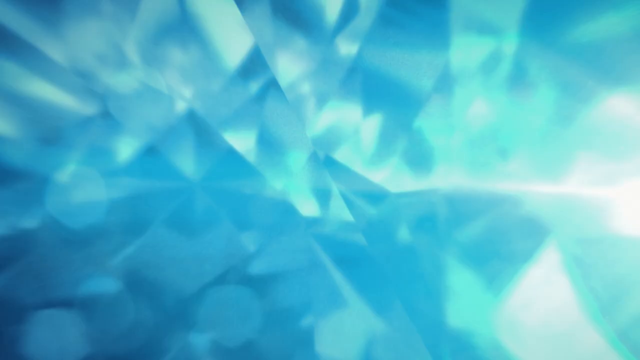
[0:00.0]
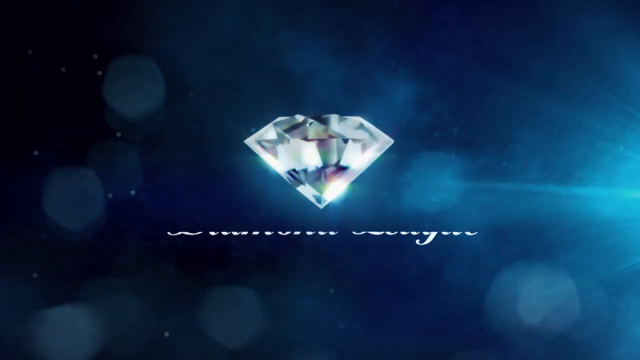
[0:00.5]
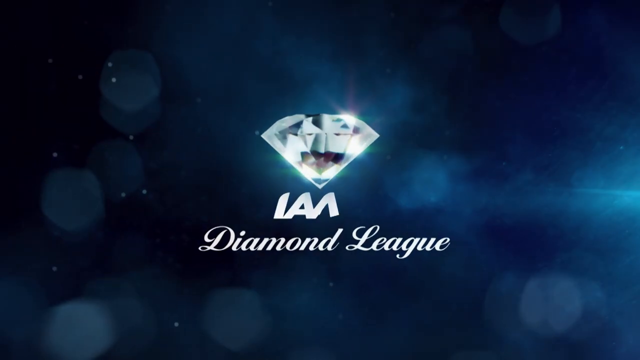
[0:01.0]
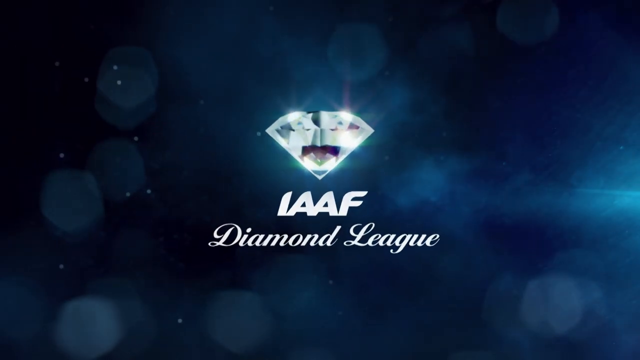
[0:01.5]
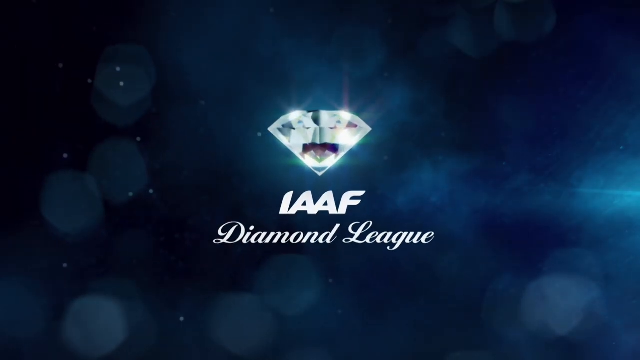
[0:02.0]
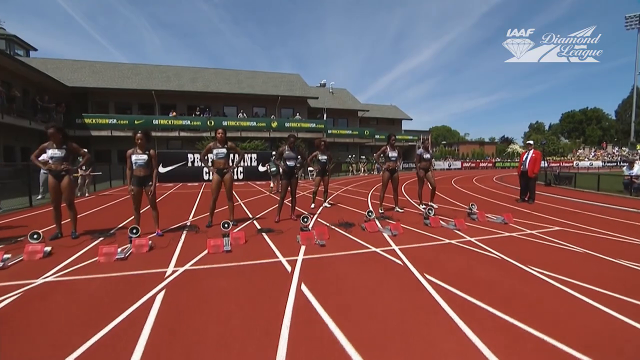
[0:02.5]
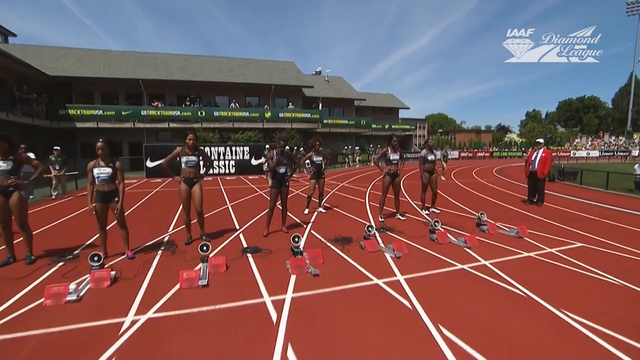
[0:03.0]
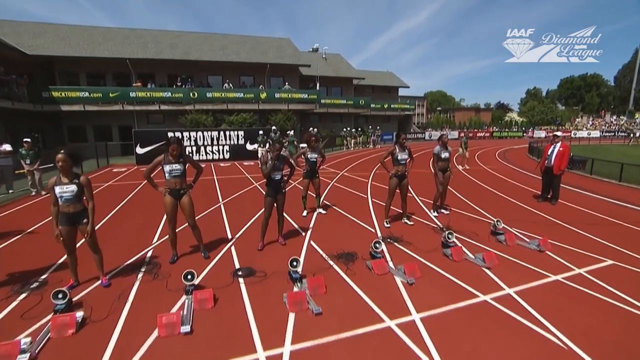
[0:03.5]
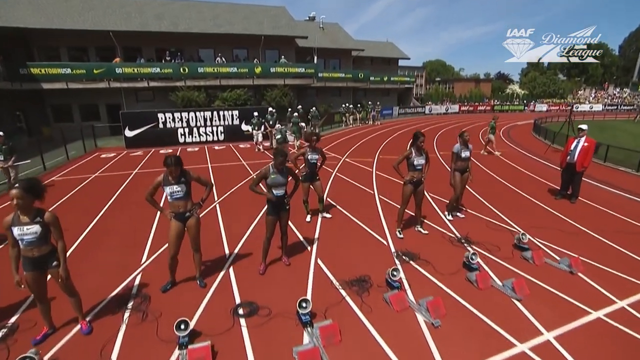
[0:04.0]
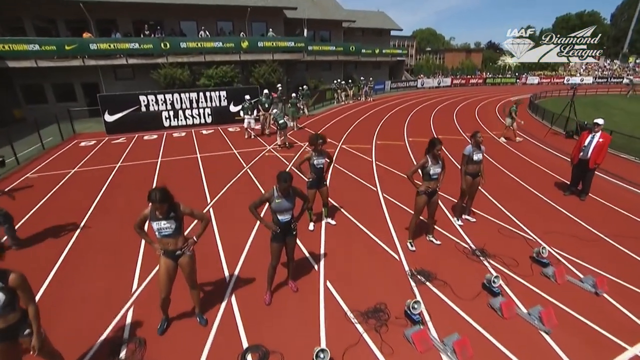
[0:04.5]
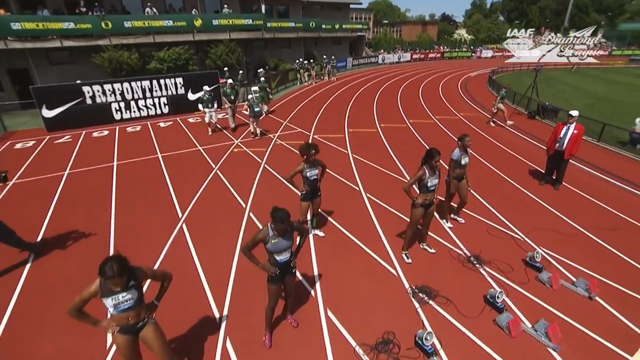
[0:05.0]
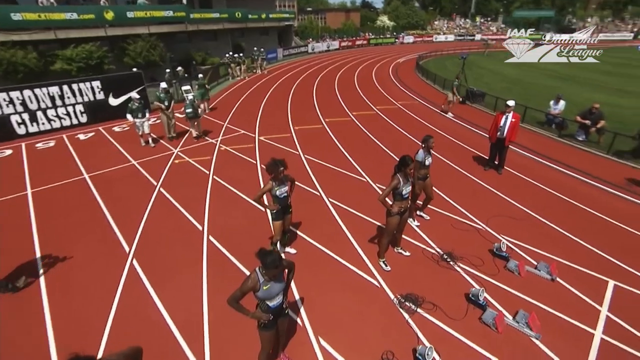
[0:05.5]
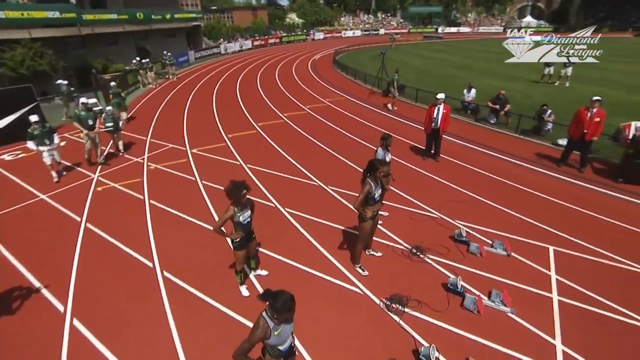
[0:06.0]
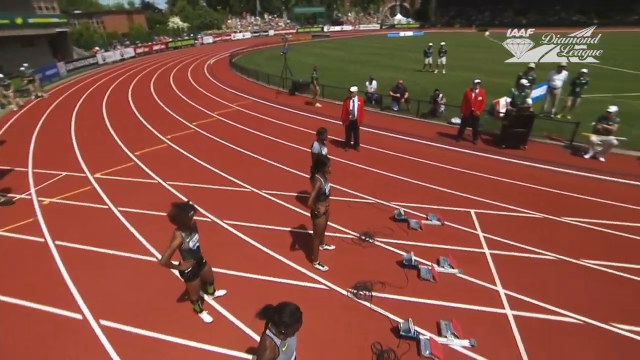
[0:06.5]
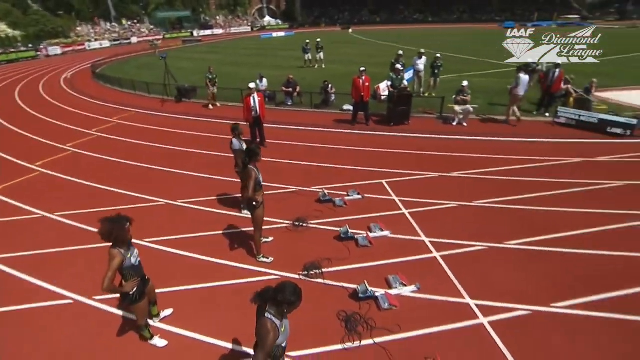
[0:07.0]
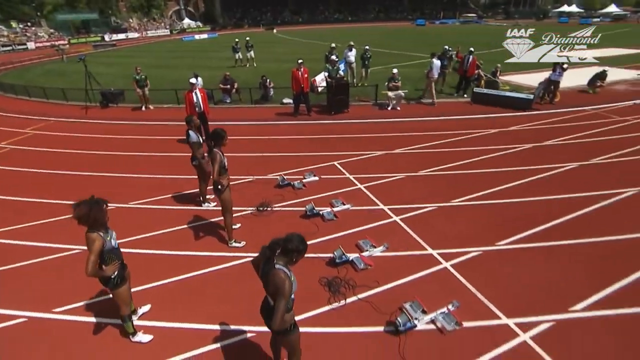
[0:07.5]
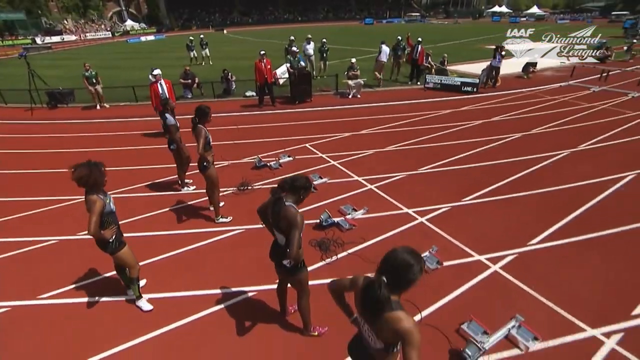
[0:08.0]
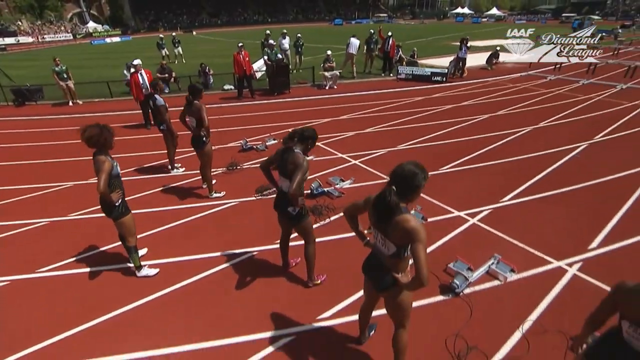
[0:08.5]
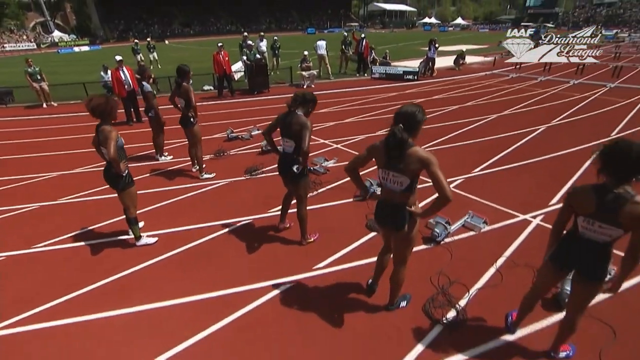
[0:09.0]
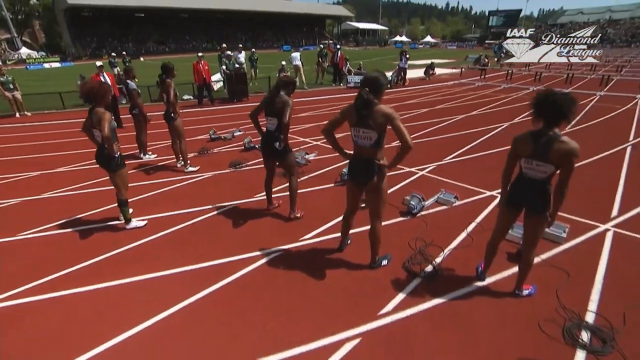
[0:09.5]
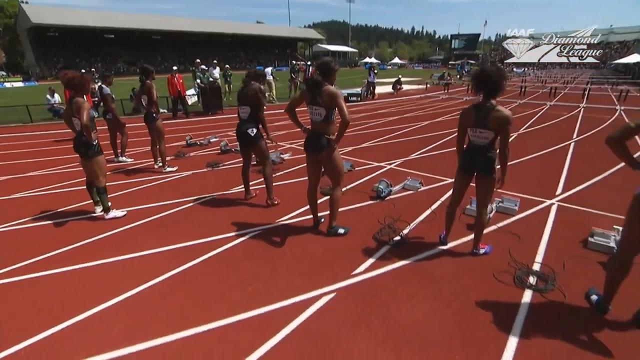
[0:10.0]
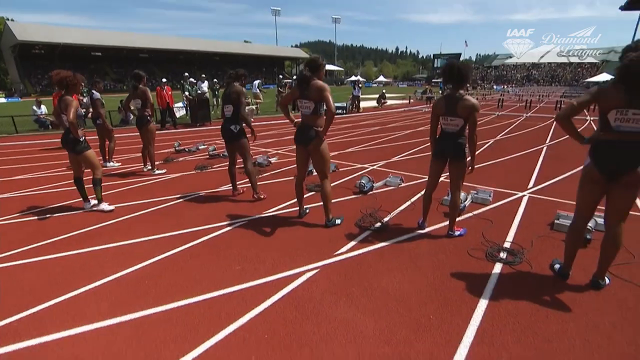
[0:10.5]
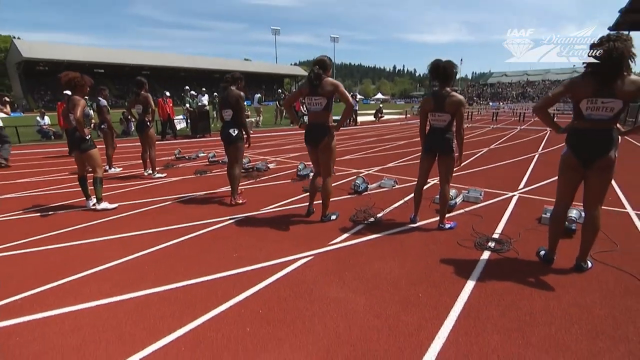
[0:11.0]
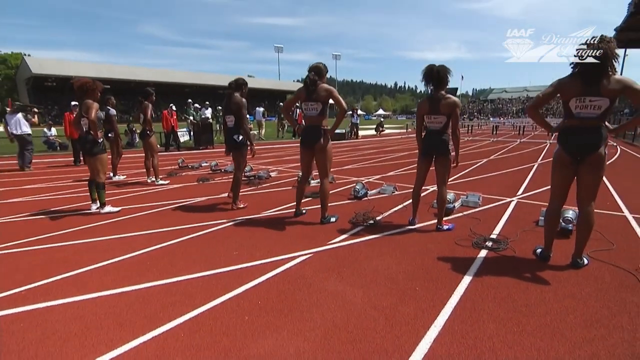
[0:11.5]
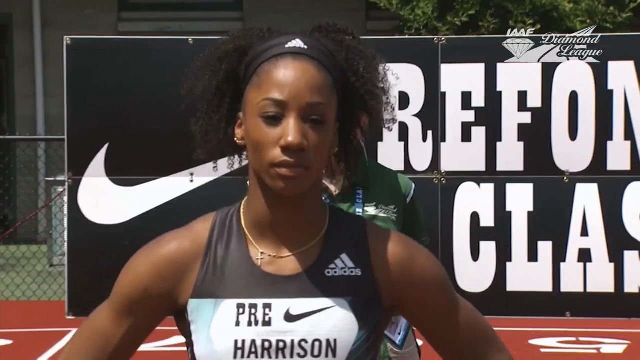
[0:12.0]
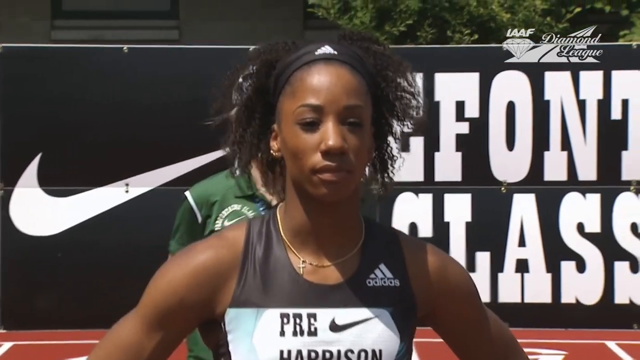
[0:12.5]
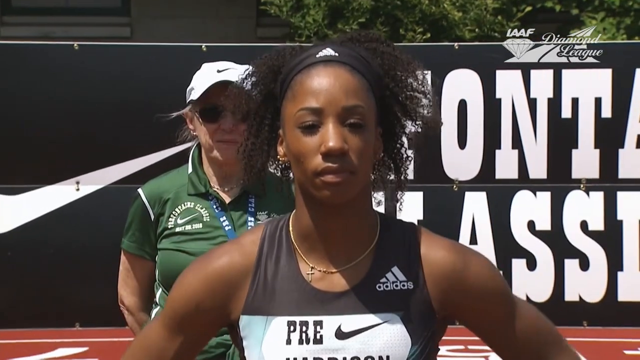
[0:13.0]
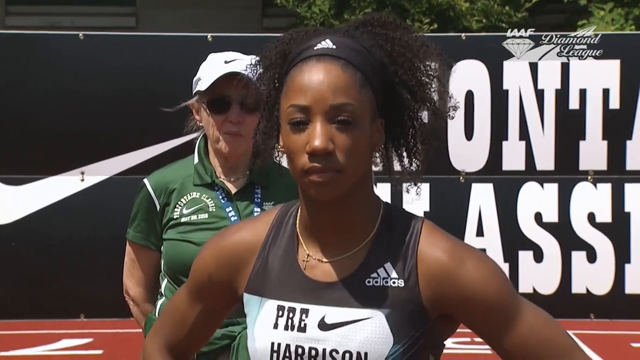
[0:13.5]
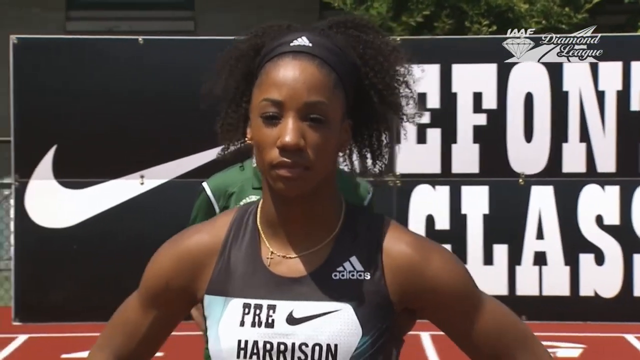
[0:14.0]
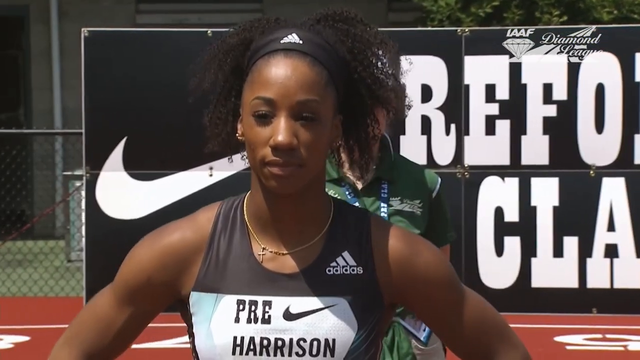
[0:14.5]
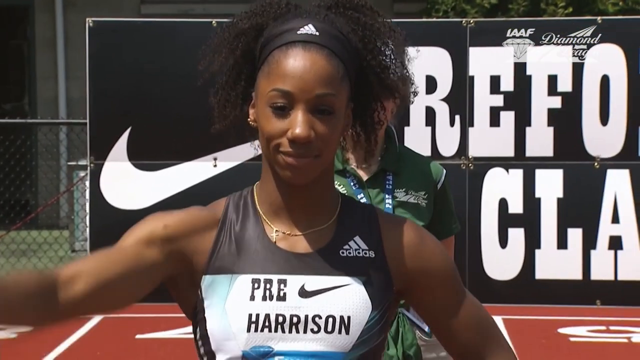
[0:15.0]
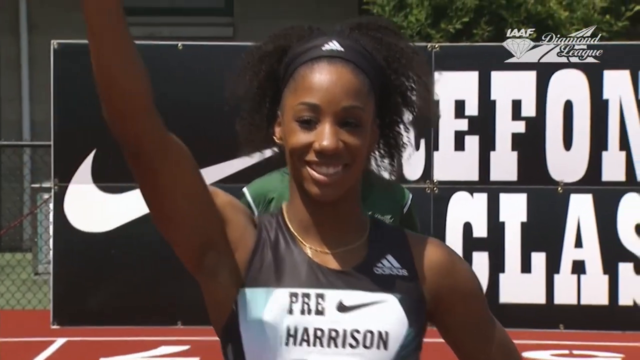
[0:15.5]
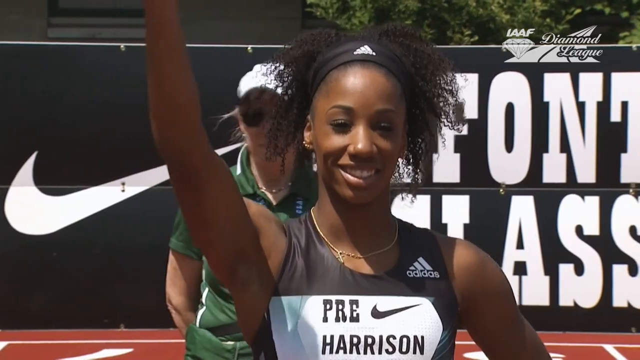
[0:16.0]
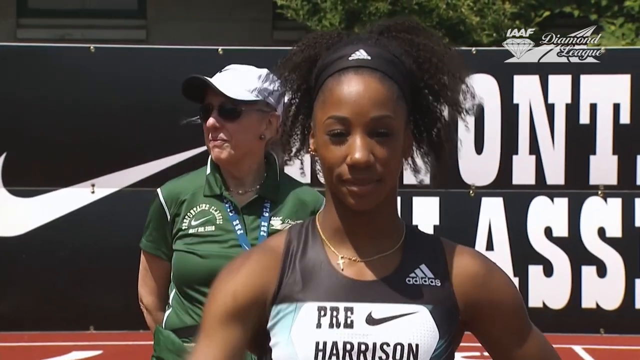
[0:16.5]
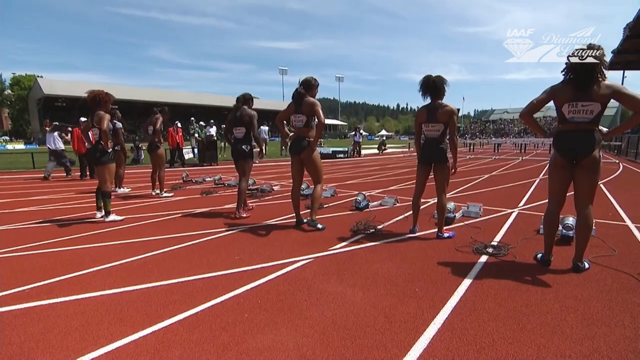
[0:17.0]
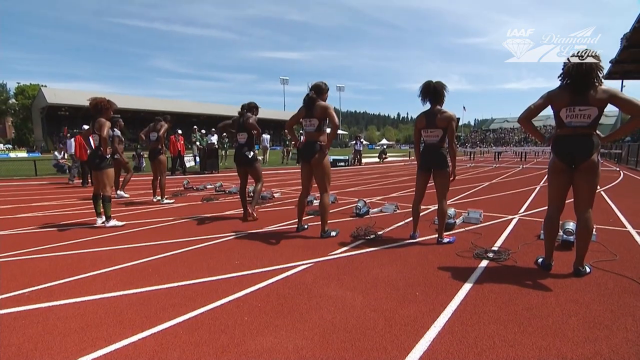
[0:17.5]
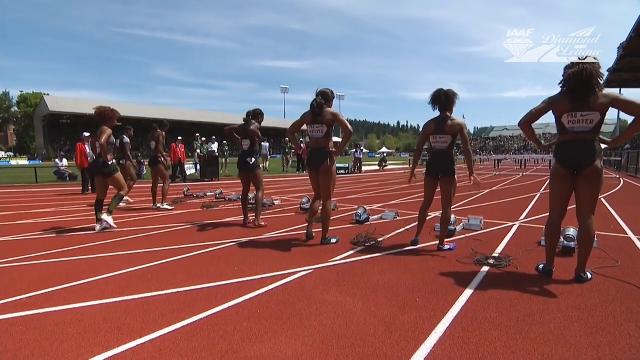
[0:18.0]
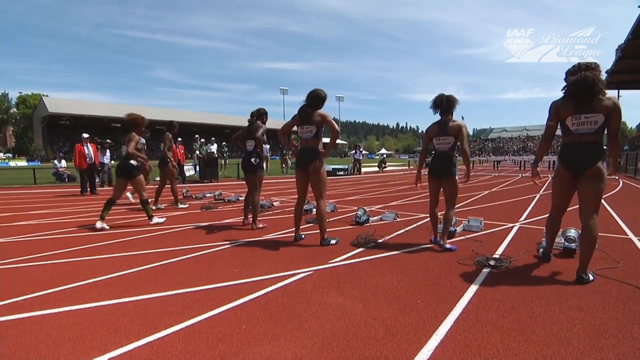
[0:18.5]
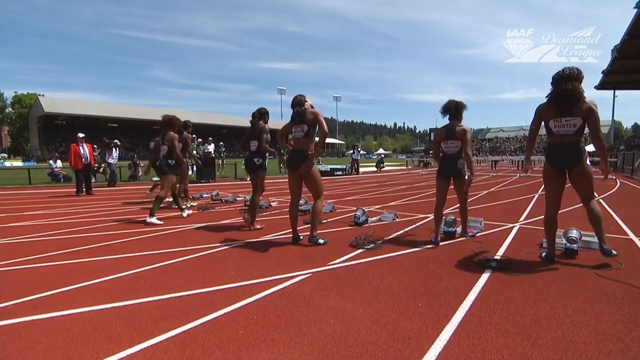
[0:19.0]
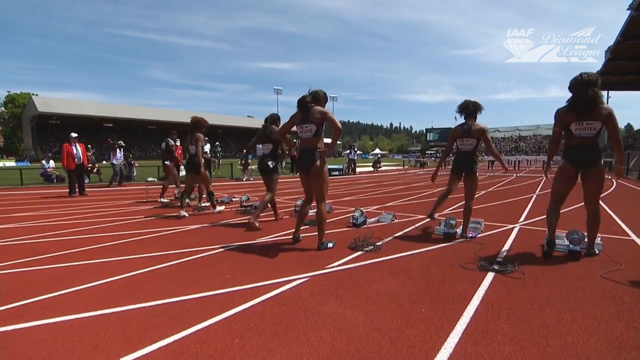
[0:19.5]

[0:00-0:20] This appears to be coverage of what looks like a women's track and field event, with all the runners visible. The video shows the starting lineup for the race, then pans up and over the starting line before cutting to a graphic that reads "IAAF Diamond League". Each runner waves to the camera and gets ready to start the race. Behind the runners is a sign with the Nike logo on it, and the camera pans up and over the runners.